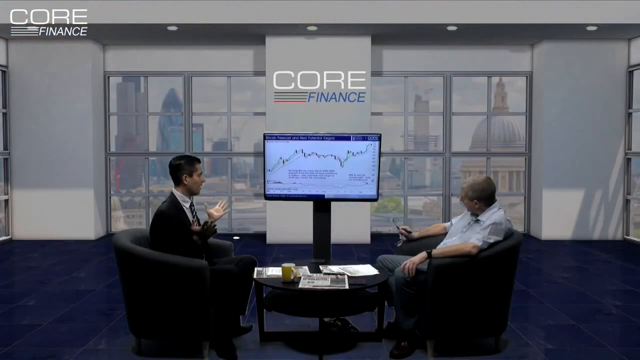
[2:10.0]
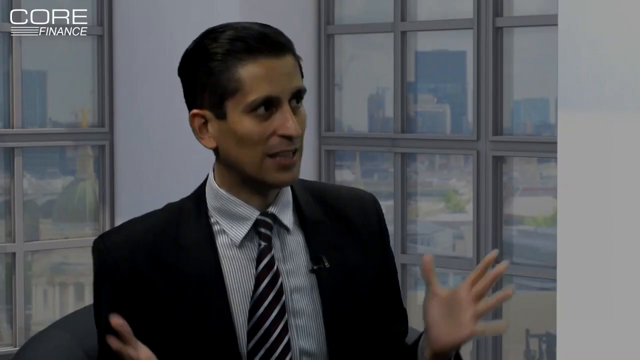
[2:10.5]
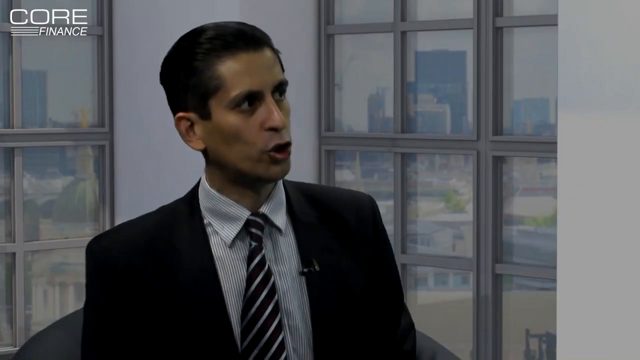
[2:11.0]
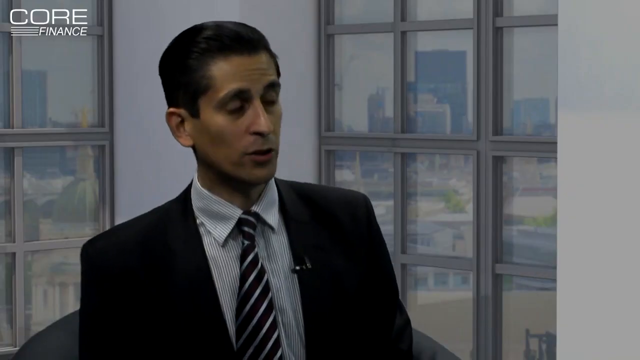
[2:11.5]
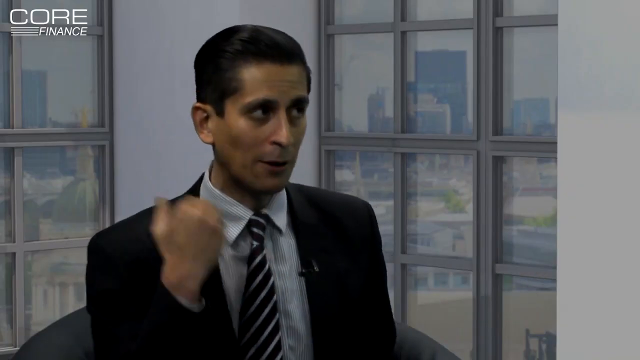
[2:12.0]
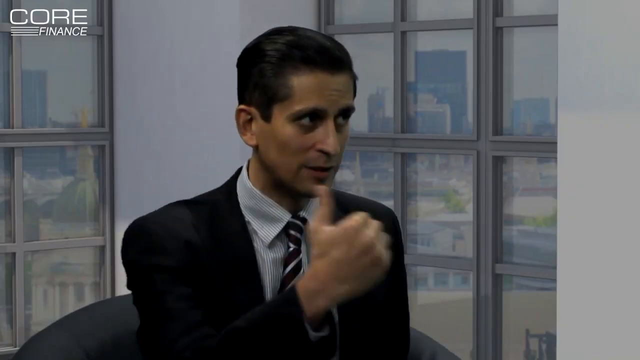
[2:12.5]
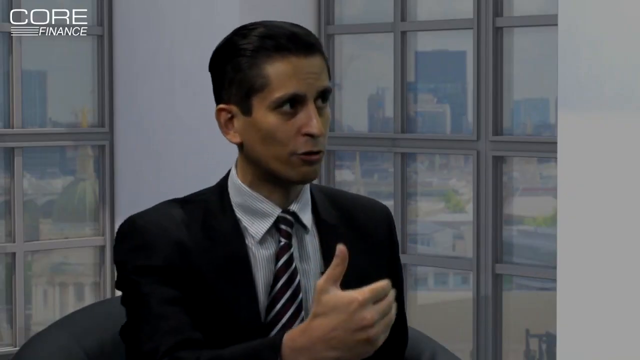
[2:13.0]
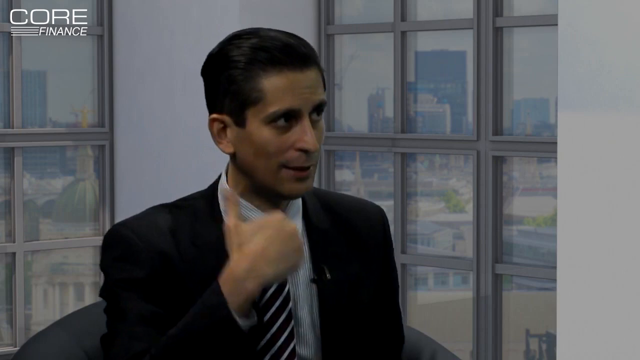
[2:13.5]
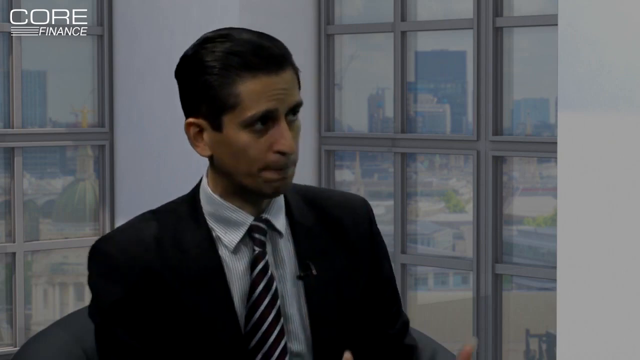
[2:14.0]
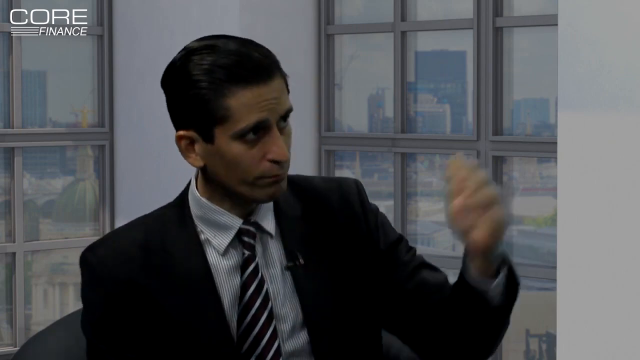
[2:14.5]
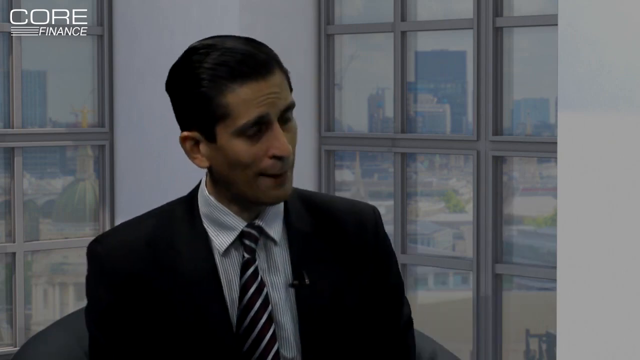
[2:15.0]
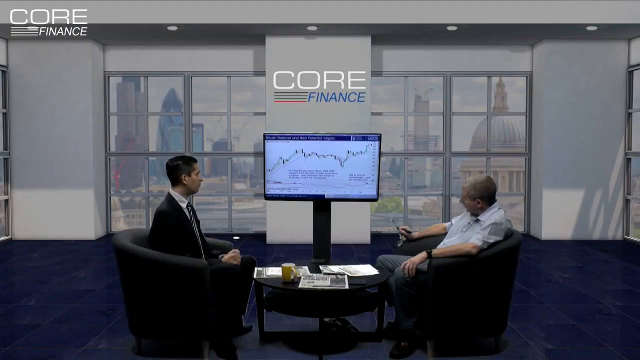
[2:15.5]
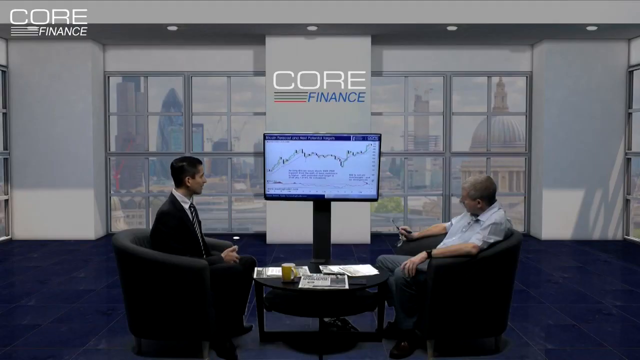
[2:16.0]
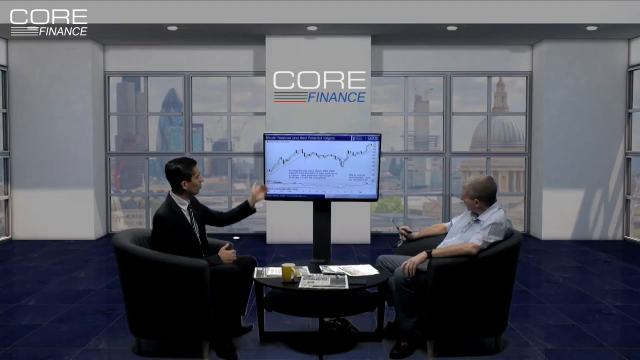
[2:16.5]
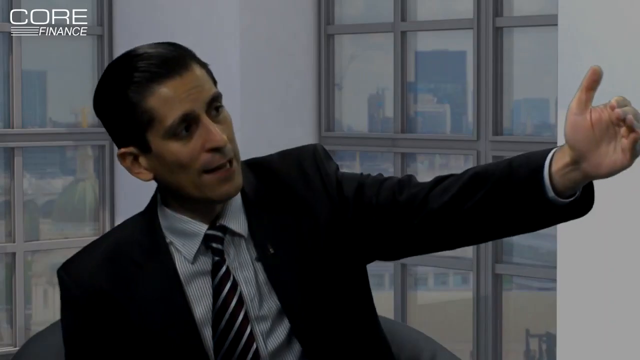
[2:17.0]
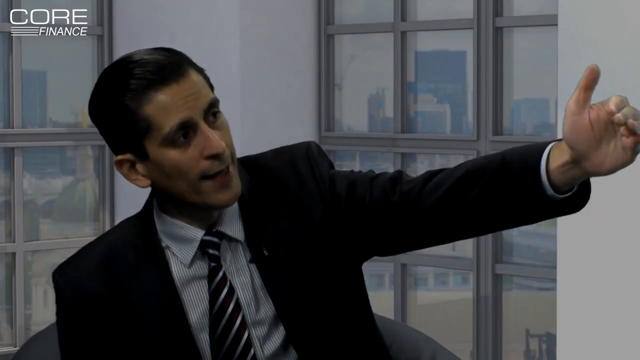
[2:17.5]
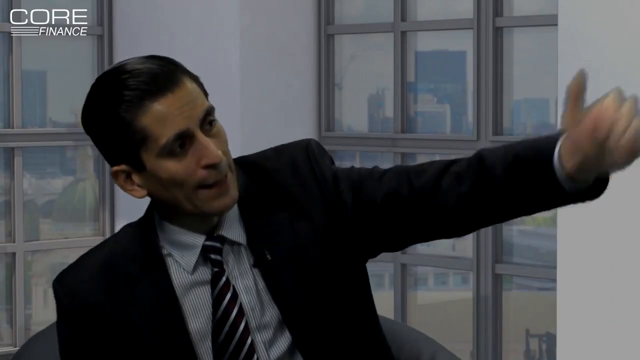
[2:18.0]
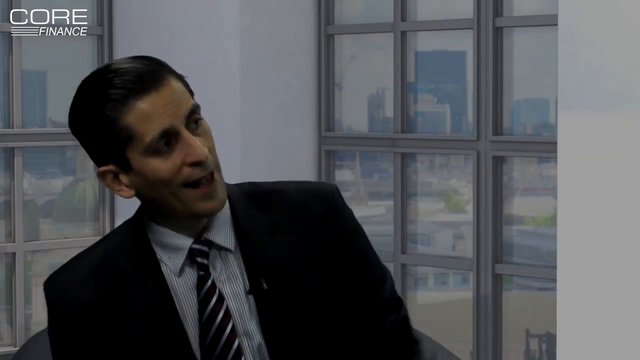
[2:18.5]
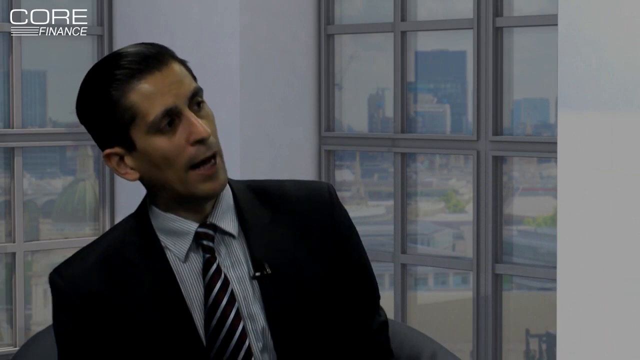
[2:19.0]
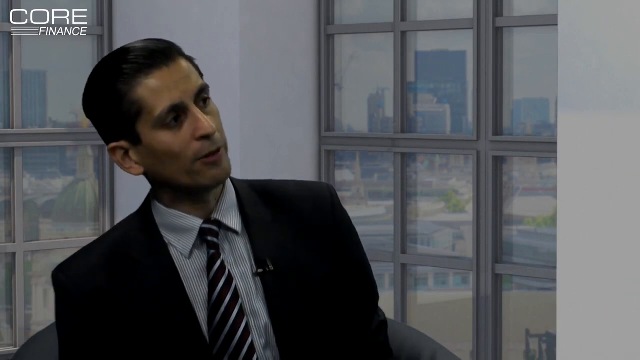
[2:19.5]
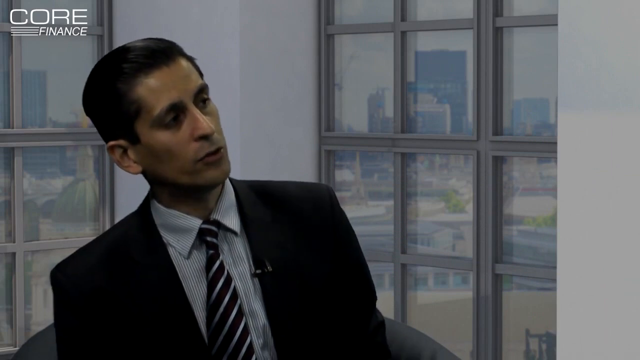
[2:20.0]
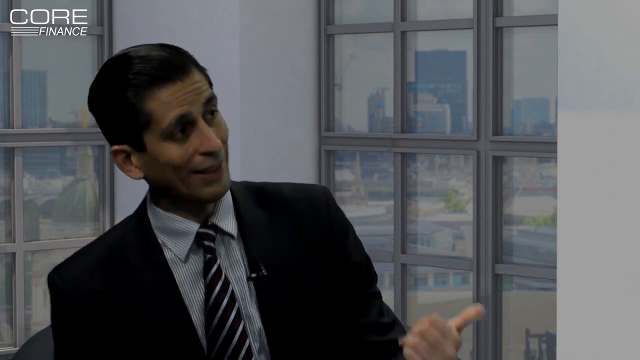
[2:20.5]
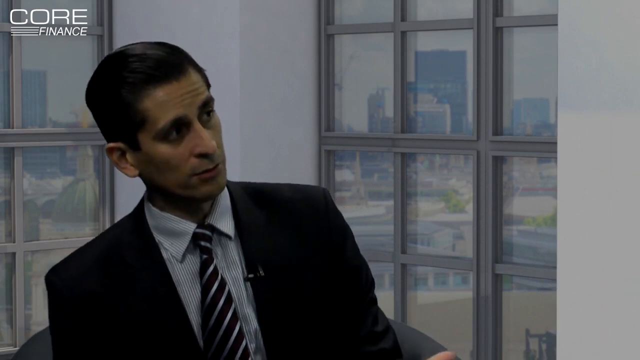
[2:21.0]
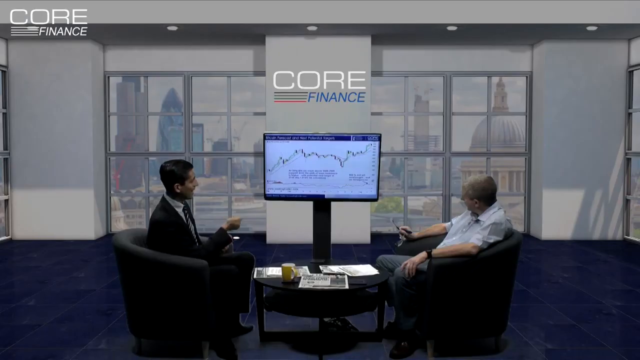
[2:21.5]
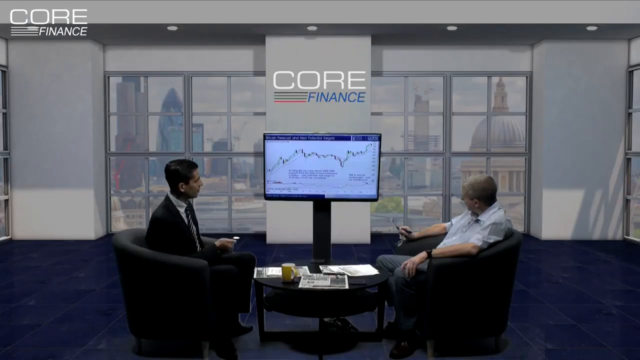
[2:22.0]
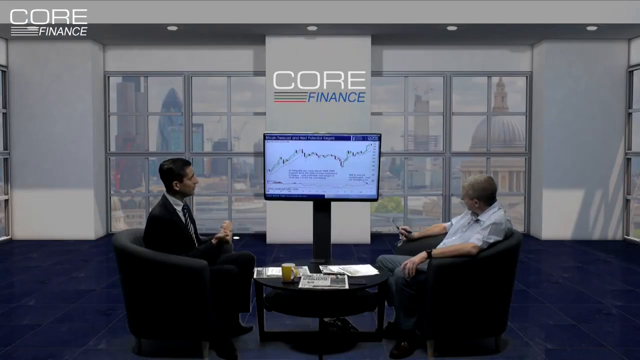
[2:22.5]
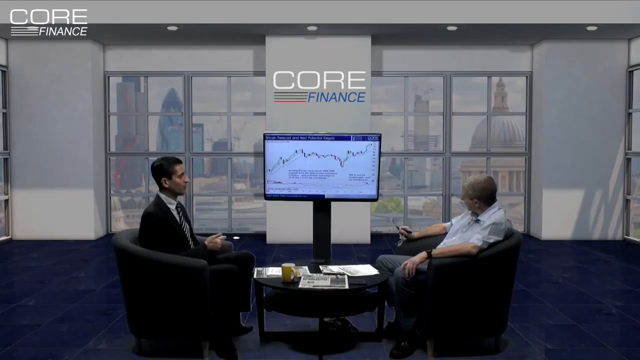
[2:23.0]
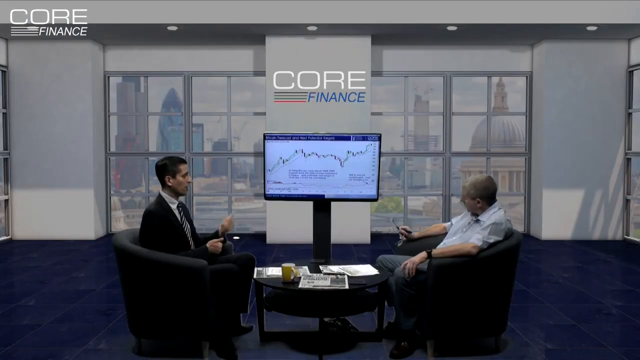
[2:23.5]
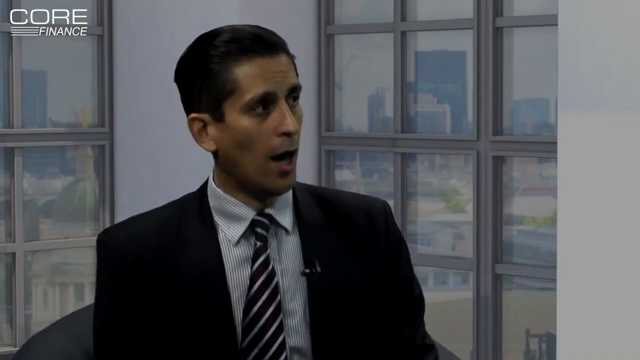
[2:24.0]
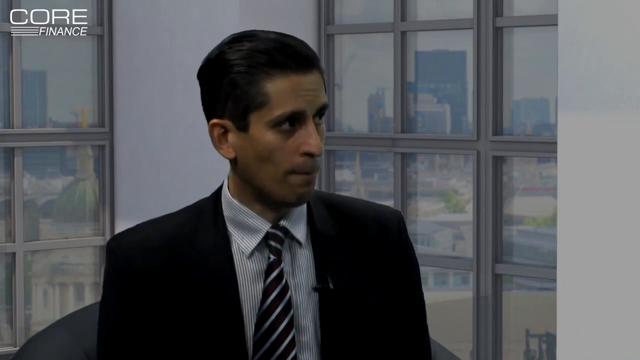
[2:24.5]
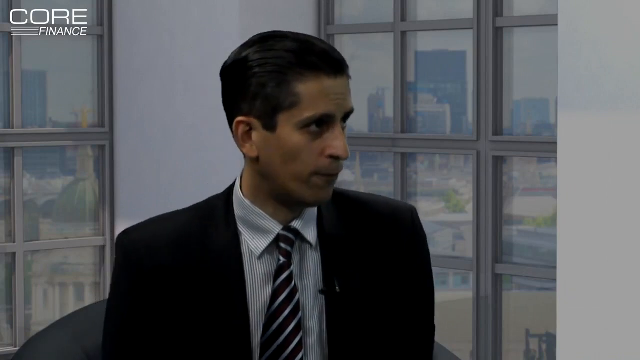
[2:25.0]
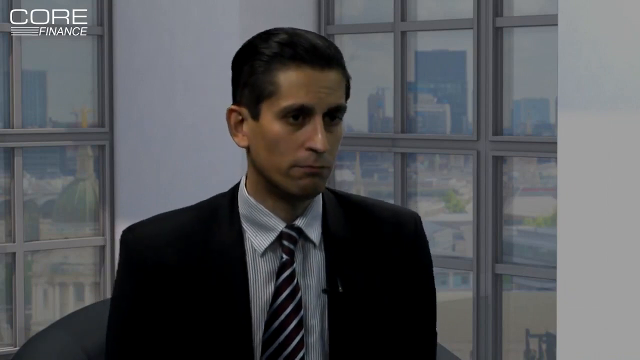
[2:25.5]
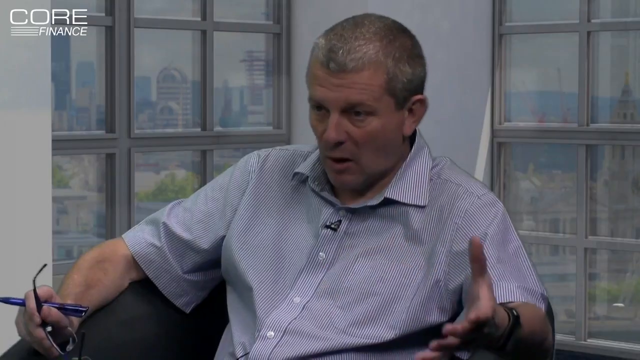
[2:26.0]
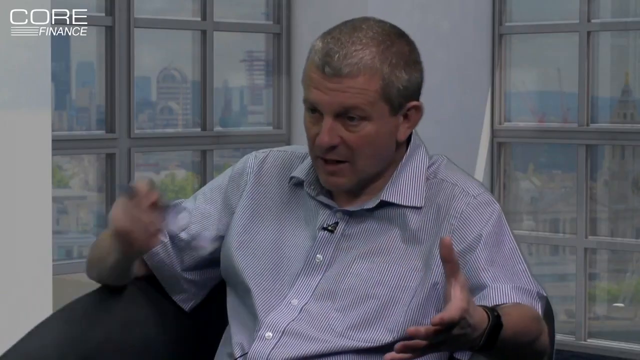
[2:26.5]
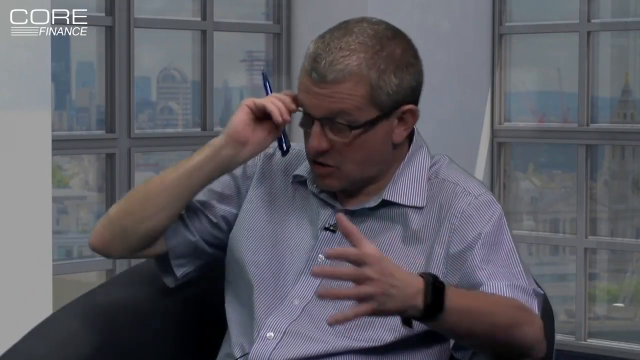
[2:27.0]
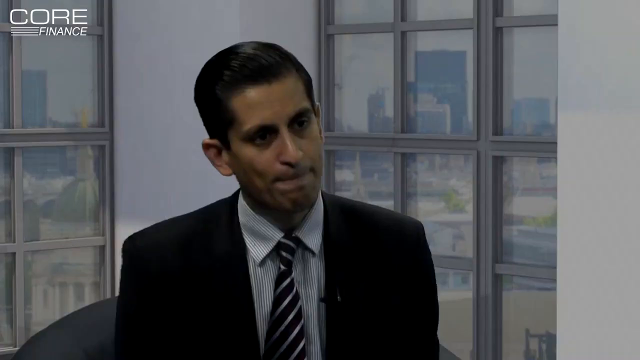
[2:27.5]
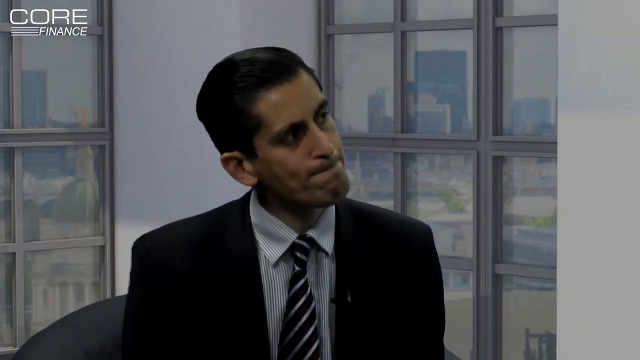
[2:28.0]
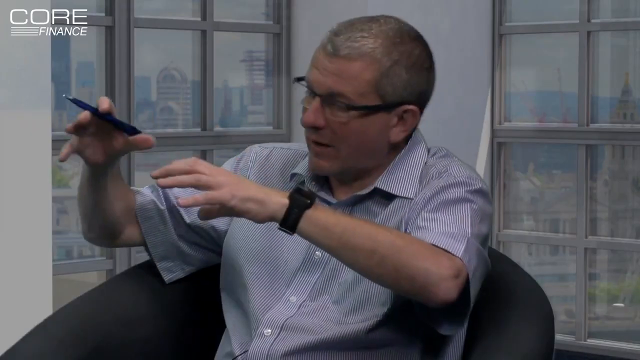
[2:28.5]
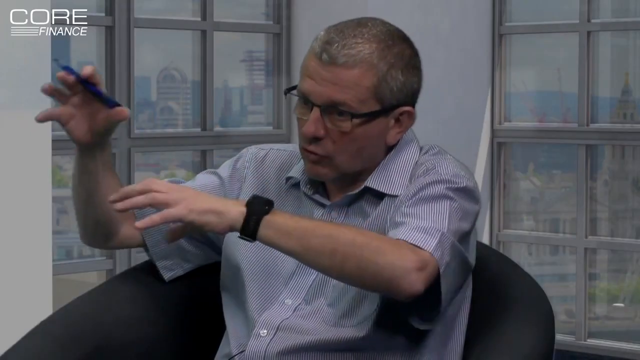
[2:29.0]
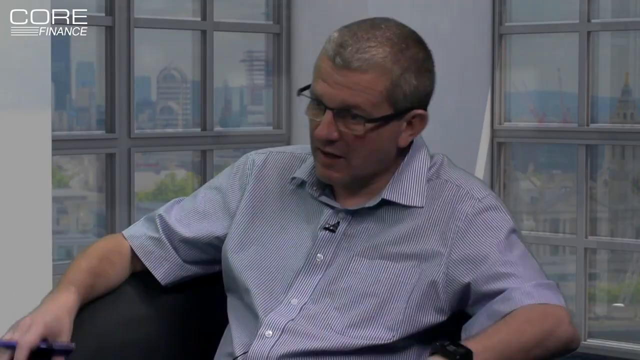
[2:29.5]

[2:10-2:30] The person in the black suit is still talking, gesturing a lot with his hands and using his fingers as if counting. Then the second person, in the short-sleeved t-shirt, speaks; he puts his glasses back on. He wears a black watch with a black watch face and is still holding the blue pen. The two give each other space to talk. "Core Finance" is written on the middle wall: "Core" is written and lit in white, and "Finance" is written in blue. The name is slightly above the monitor stand and slightly toward the ceiling. The television or monitor screen is mounted on a black stand with a huge black leg. The name has an icon made of four horizontal lines in different colours, including black, green and red.